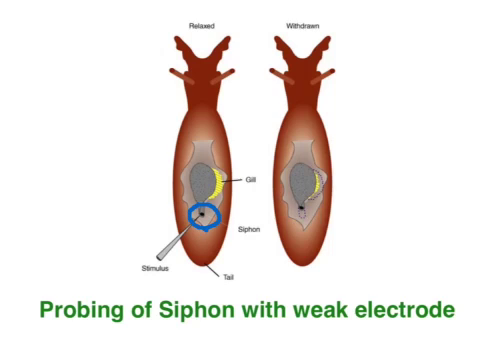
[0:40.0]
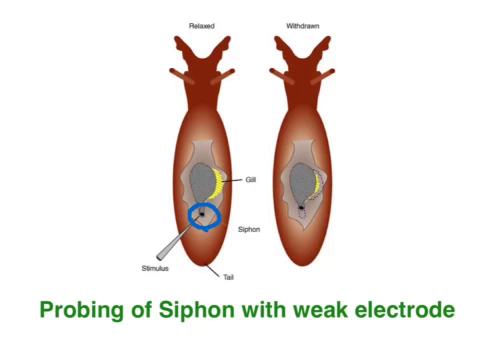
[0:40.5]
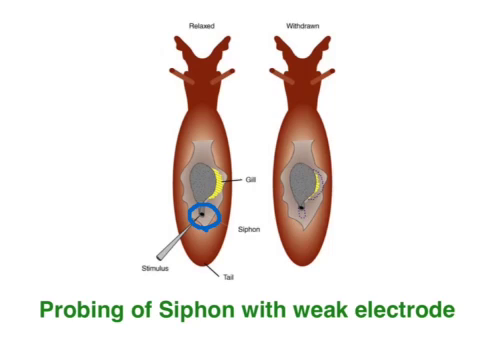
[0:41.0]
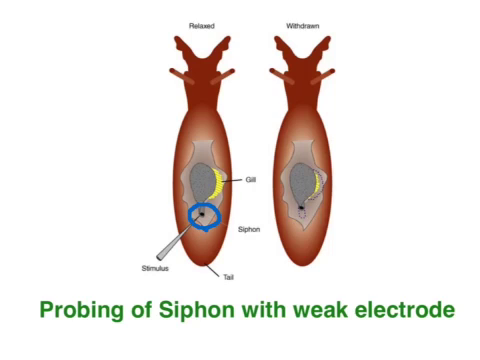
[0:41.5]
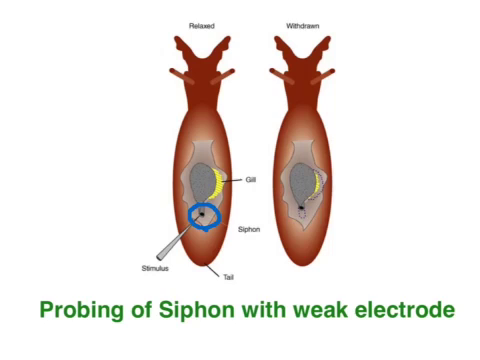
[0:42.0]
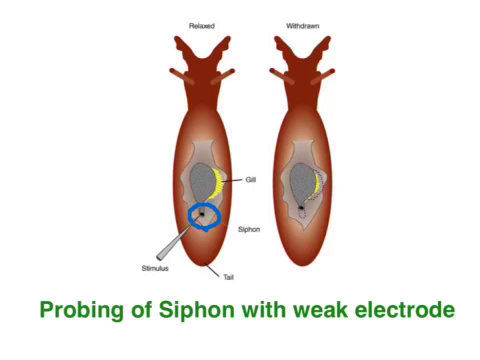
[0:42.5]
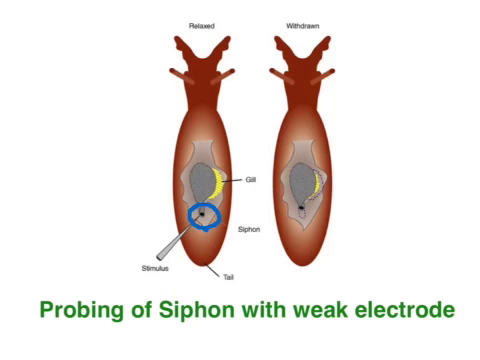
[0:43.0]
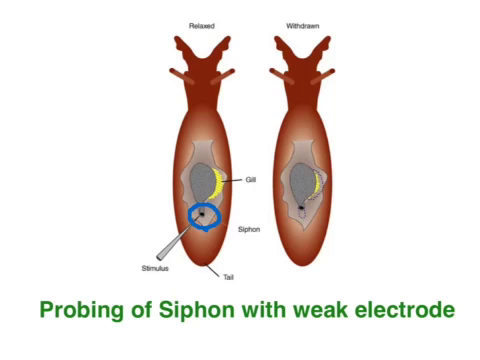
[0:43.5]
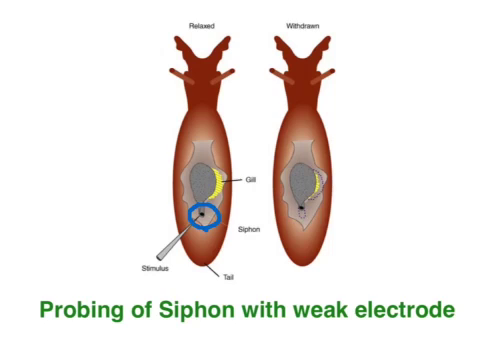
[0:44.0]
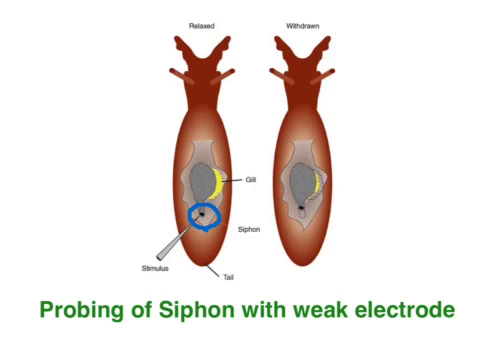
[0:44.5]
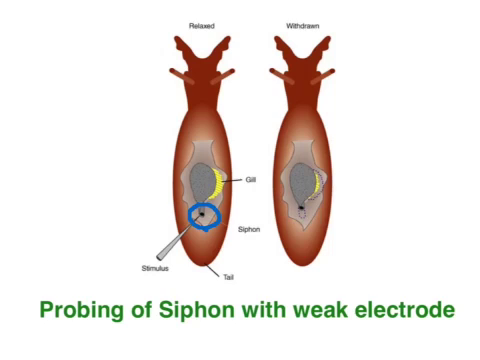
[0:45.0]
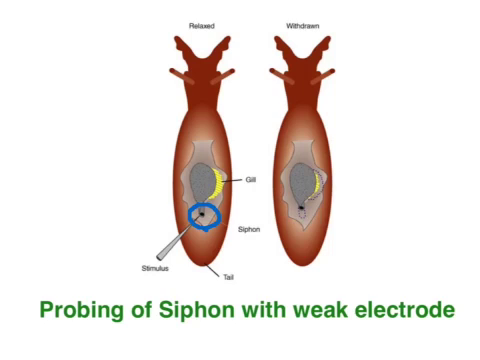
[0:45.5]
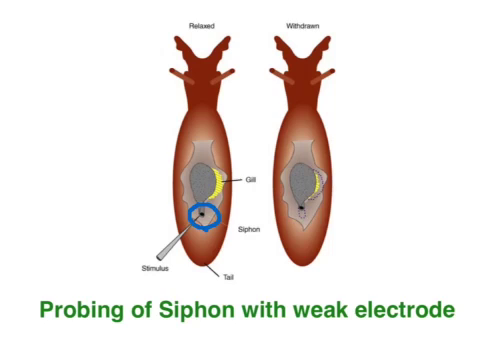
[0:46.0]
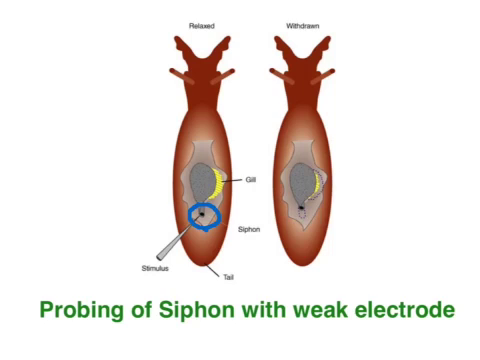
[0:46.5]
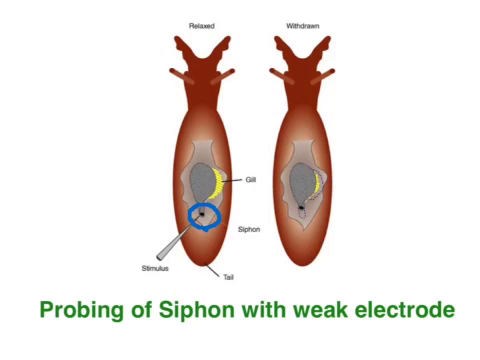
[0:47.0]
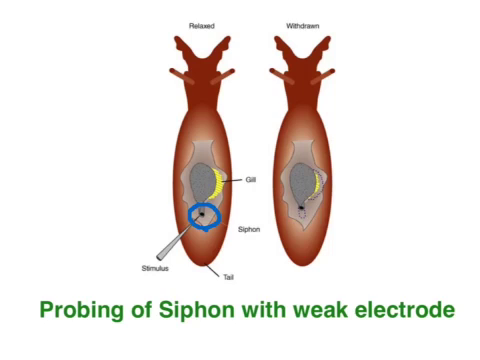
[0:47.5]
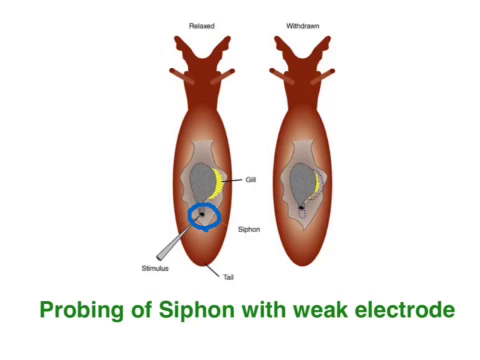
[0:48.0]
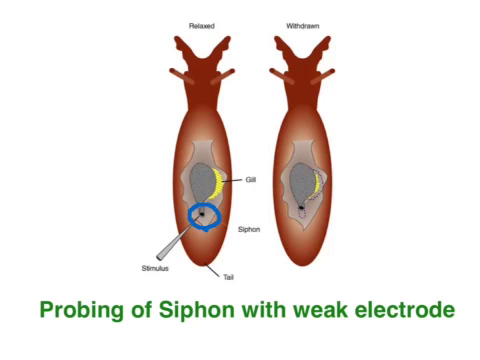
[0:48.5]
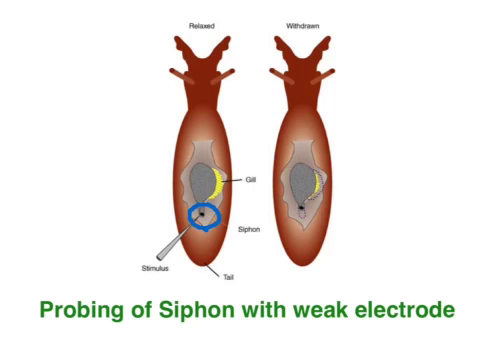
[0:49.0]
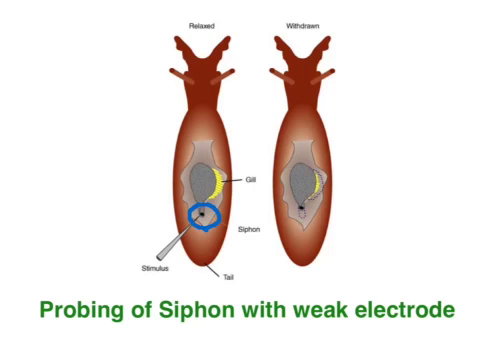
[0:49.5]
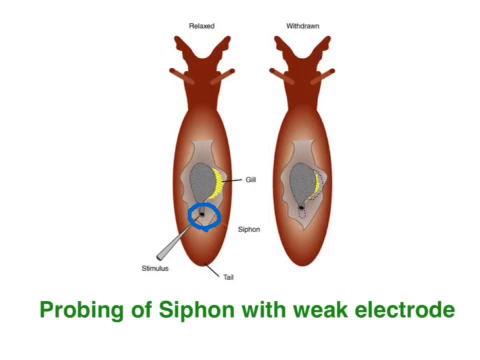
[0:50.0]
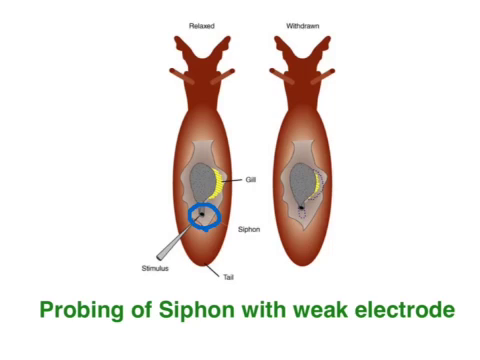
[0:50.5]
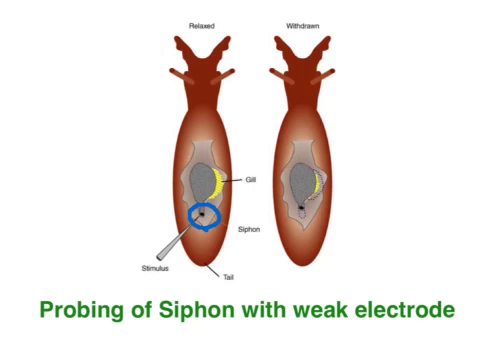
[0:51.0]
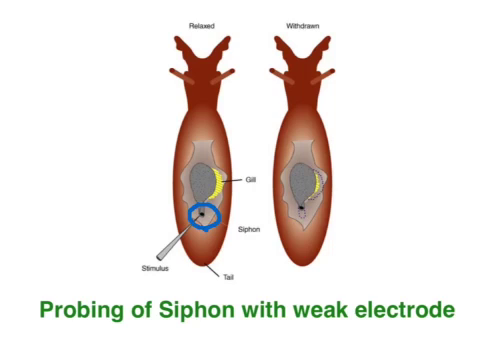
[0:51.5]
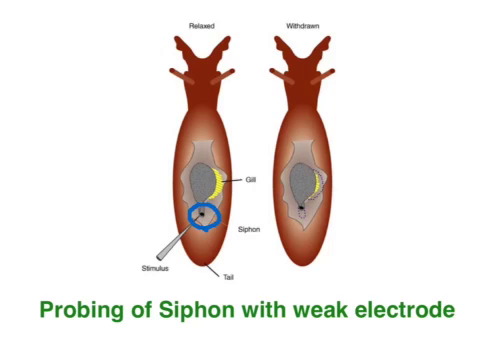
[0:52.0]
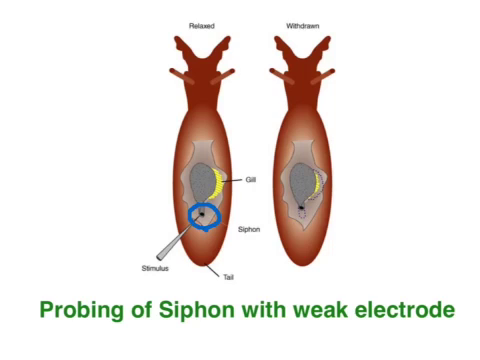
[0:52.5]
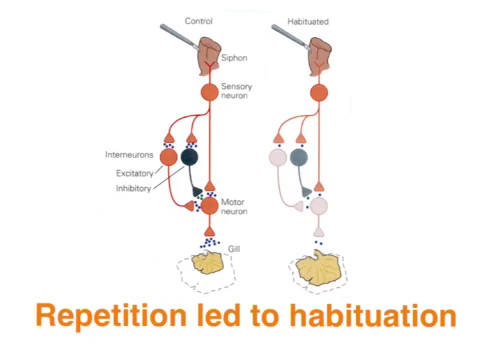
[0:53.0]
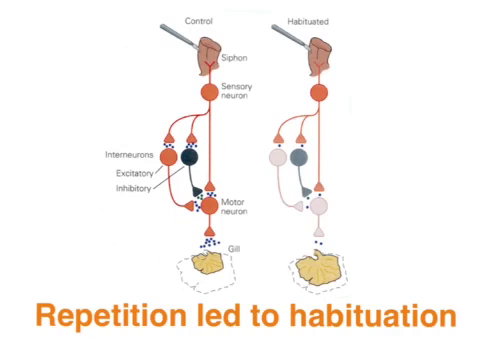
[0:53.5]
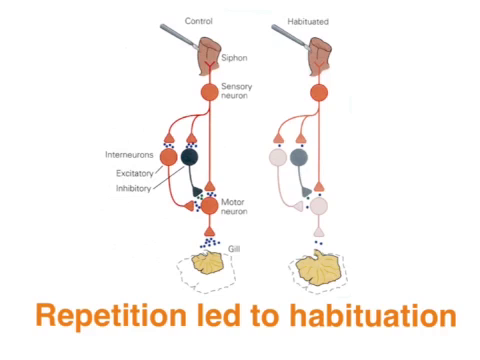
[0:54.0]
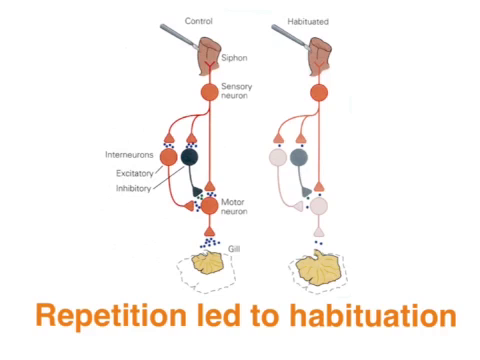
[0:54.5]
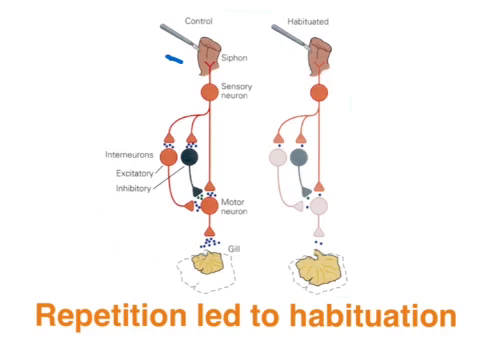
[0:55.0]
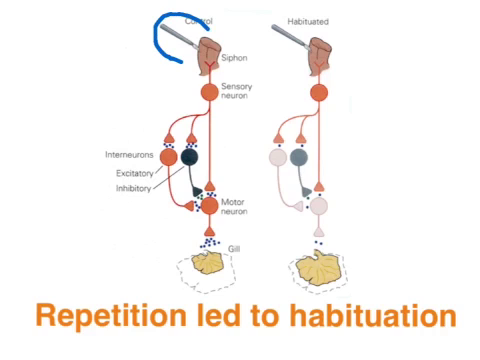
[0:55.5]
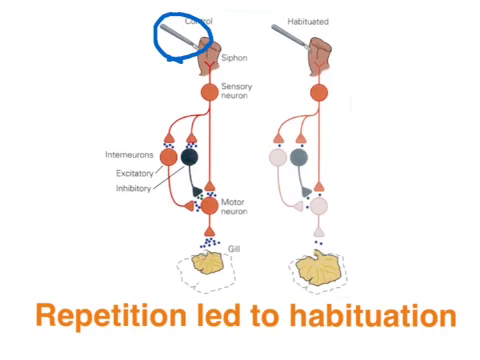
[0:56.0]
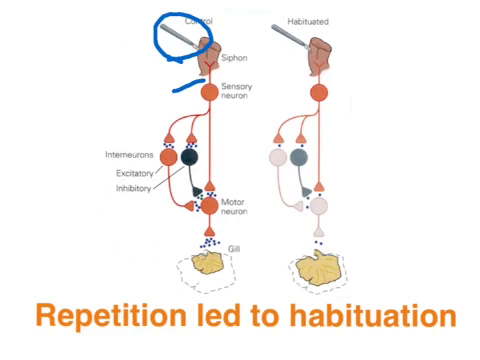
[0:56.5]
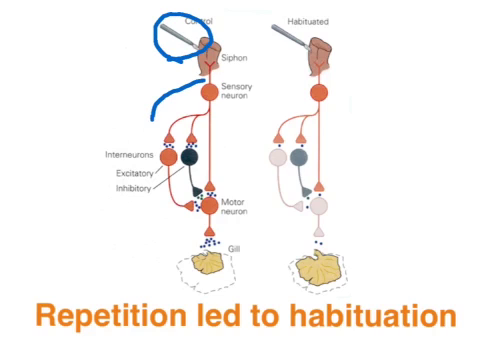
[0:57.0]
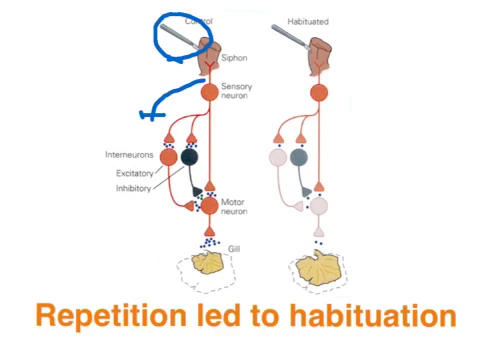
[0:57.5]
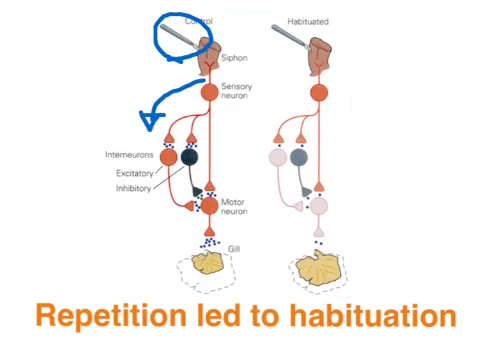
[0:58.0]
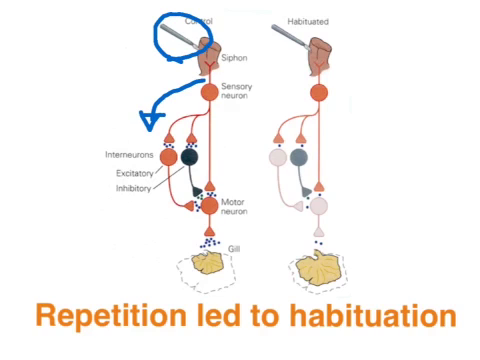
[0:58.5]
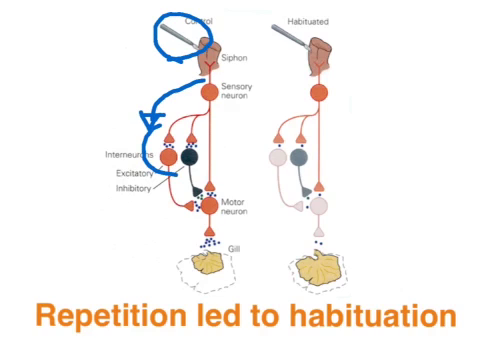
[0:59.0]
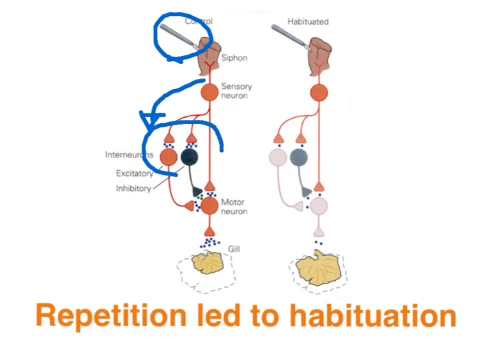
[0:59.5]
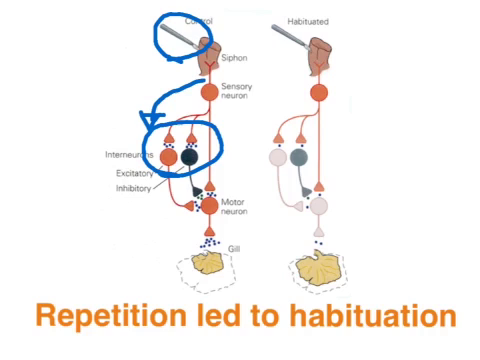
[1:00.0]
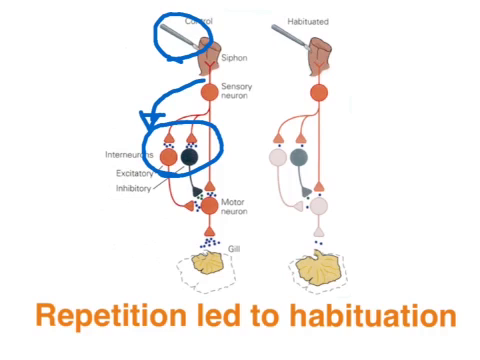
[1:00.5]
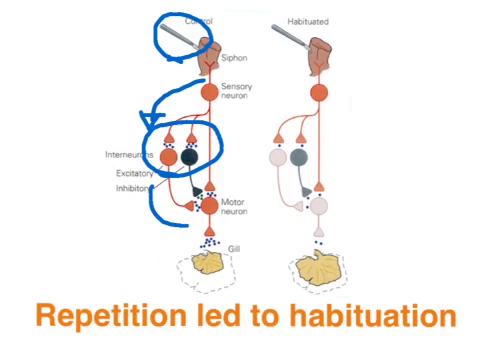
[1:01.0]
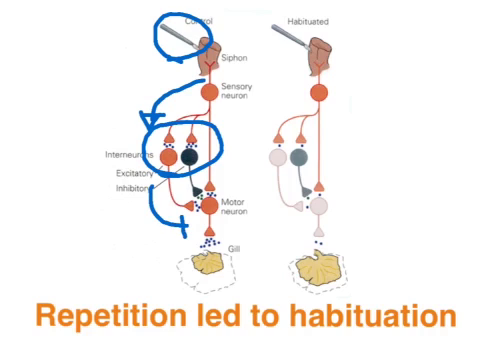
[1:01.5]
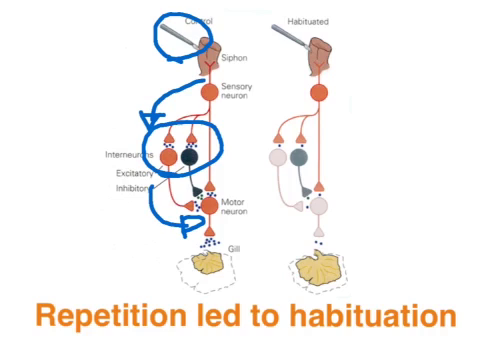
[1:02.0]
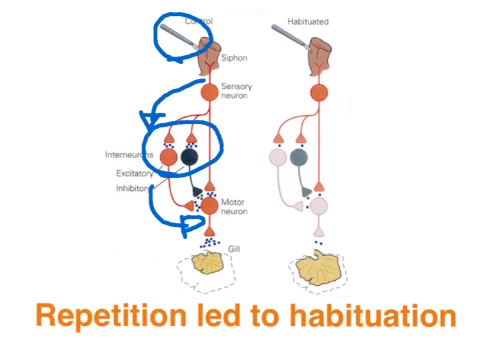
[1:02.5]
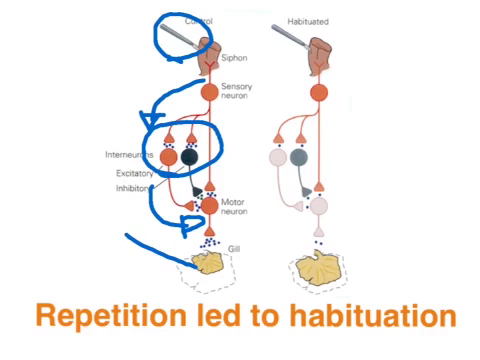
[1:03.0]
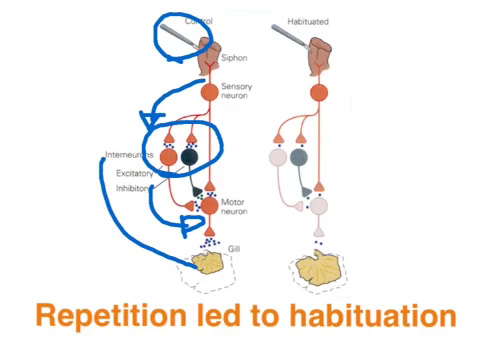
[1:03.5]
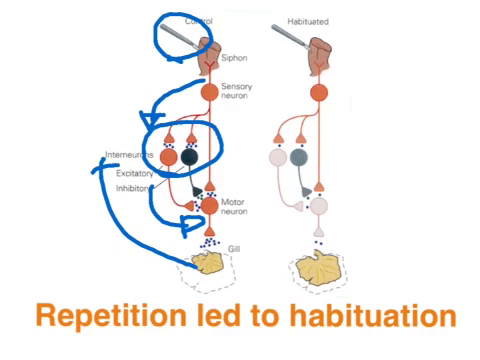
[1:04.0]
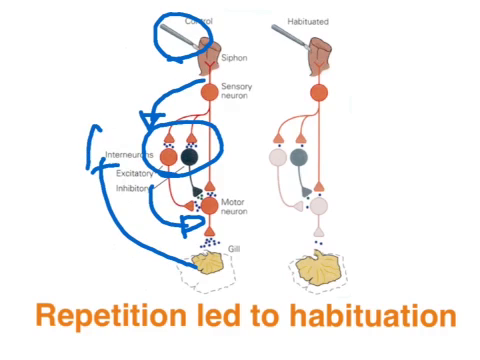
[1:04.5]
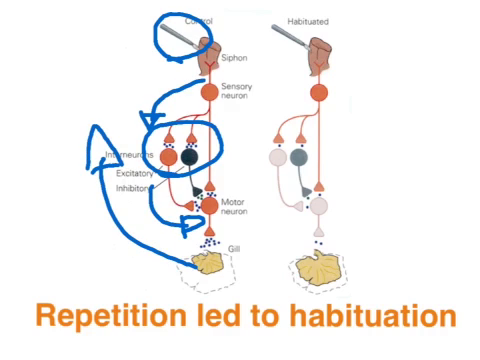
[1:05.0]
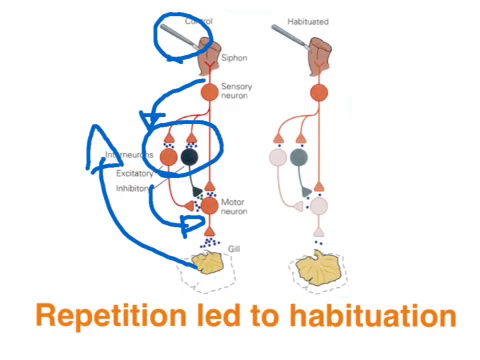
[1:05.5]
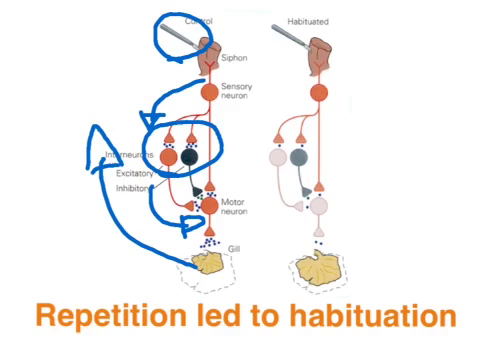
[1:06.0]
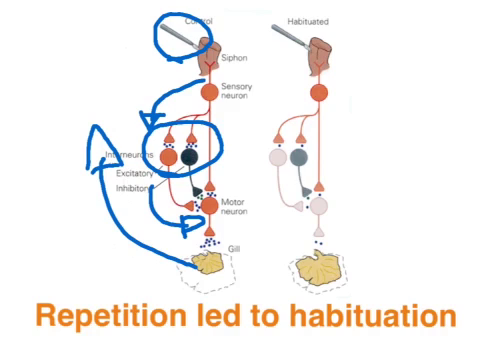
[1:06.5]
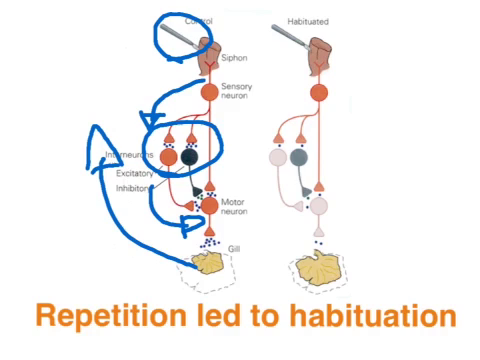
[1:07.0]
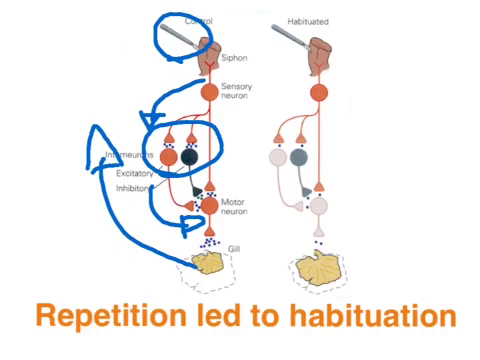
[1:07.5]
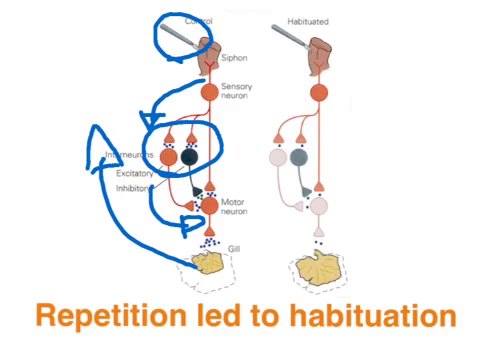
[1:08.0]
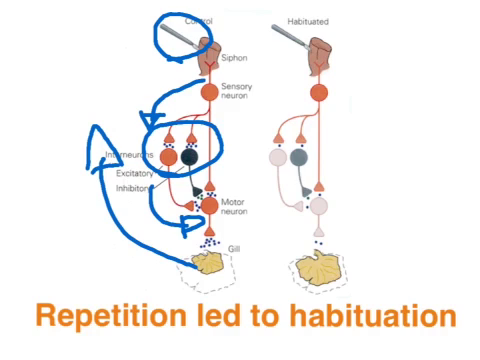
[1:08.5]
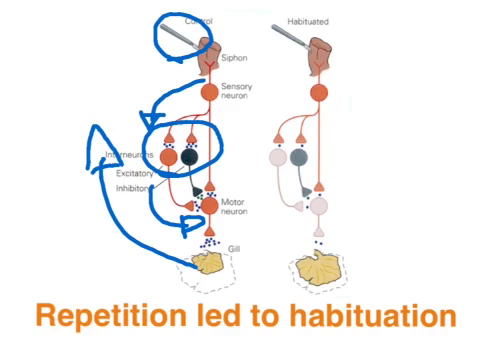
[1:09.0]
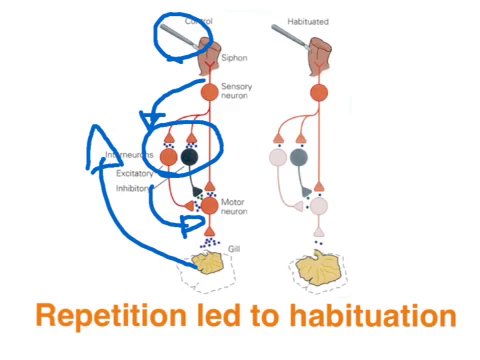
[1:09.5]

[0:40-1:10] A side-by-side illustration shows two top views of the sea slug, relaxed on the left and withdrawn on the right. The slugs' bodies are rendered in brown, with an opening in the center. The left side labels the gill, shown in yellow; the right side shows the same gill with a smaller part in yellow. The words "siphon," "tail" and "stimulus" appear on the left-hand slug, with the stimulus indicated by a drawing of a short, sharp needle. The illustration then changes to a dynamic image labeled "Repetition Led to Habituation," with two identical drawings on the left and right. At the top, the left says "control" and the right says "habituated." The left drawing is labeled "siphon," "sensory neuron," "interneurons," "excitatory," "inhibitory," "motor neuron" and "gill." A blue marker circles the control on the left, then draws an arrow from the sensory neuron down to the interneurons, which are circled again in blue. Another arrow is drawn from inhibition to the motor neuron, then one pointing upward from the gill.